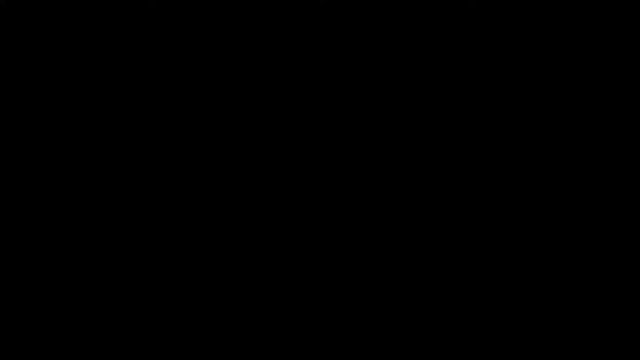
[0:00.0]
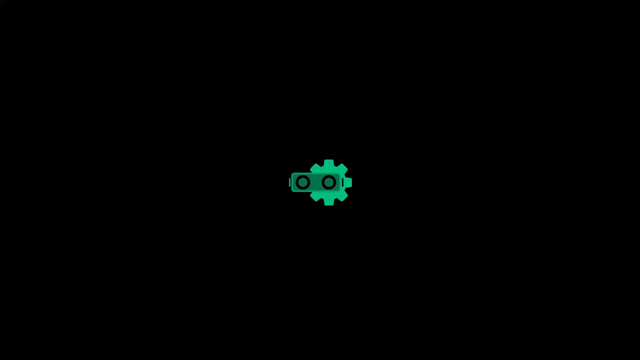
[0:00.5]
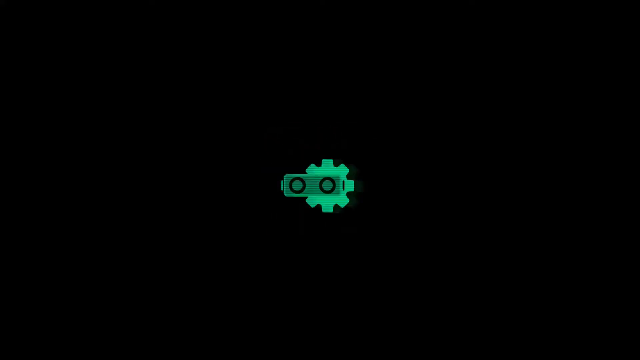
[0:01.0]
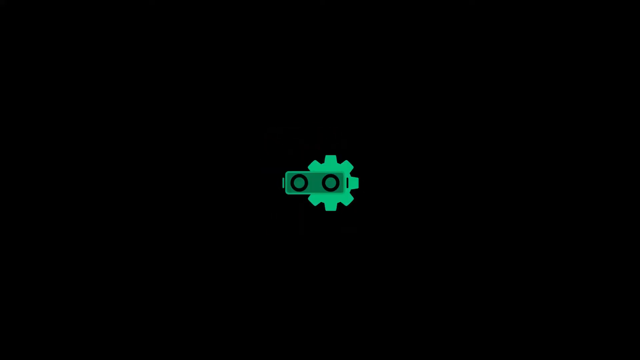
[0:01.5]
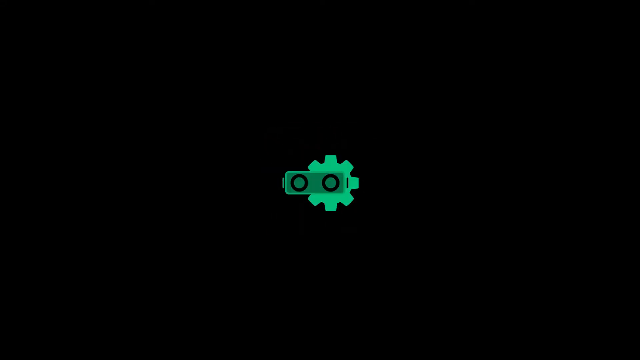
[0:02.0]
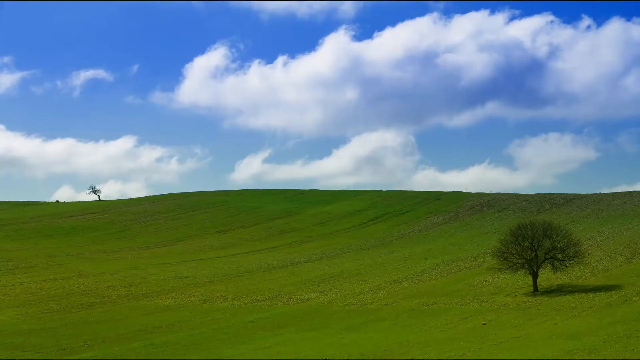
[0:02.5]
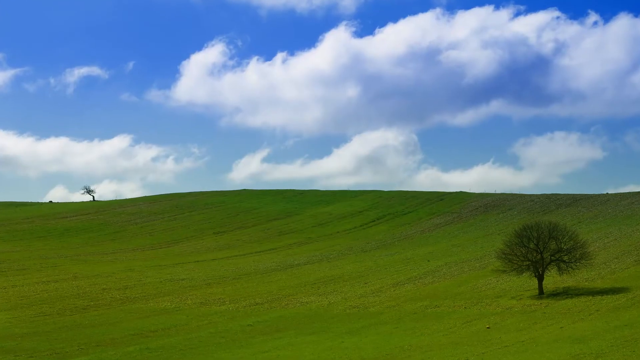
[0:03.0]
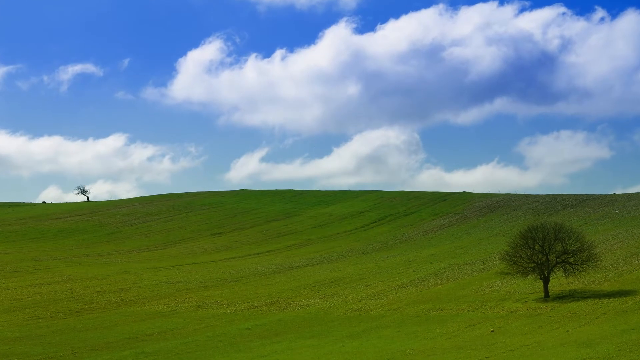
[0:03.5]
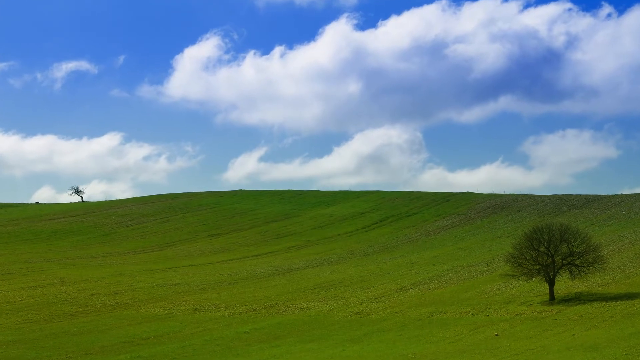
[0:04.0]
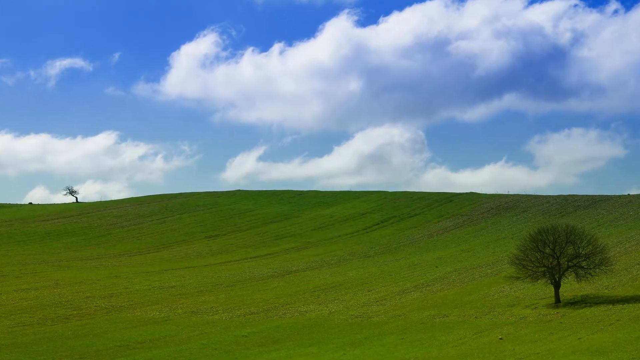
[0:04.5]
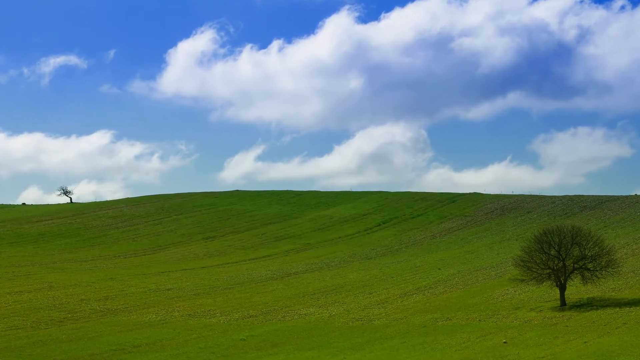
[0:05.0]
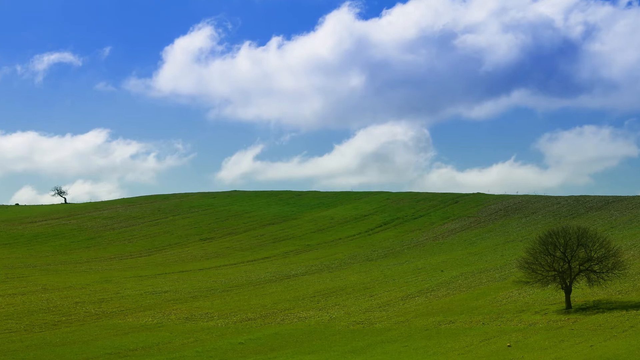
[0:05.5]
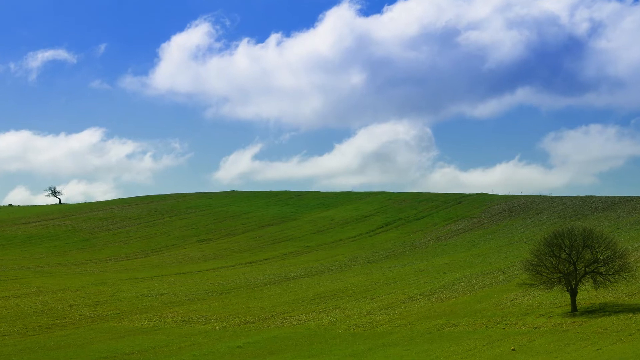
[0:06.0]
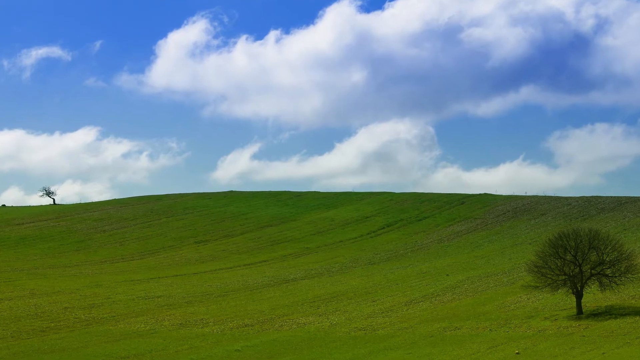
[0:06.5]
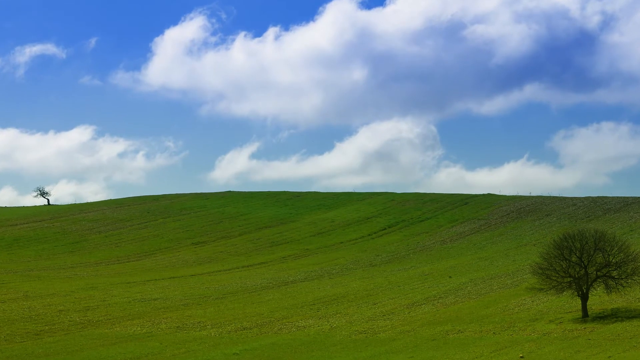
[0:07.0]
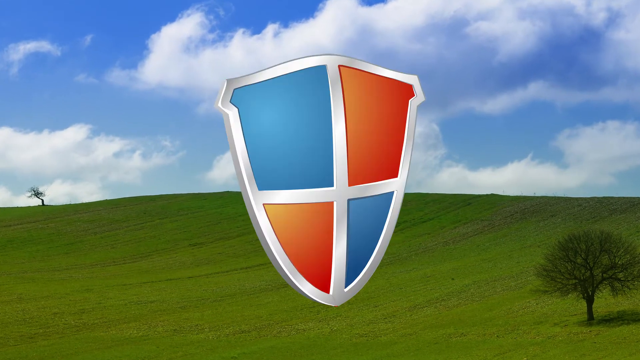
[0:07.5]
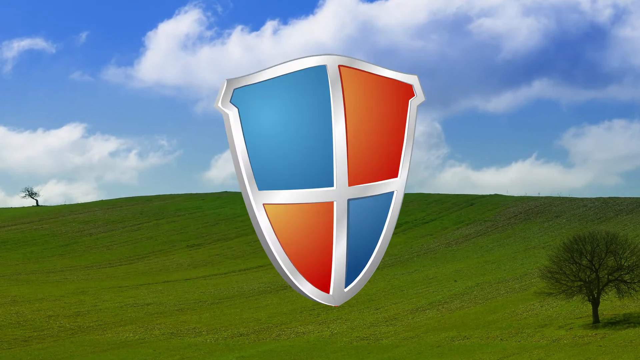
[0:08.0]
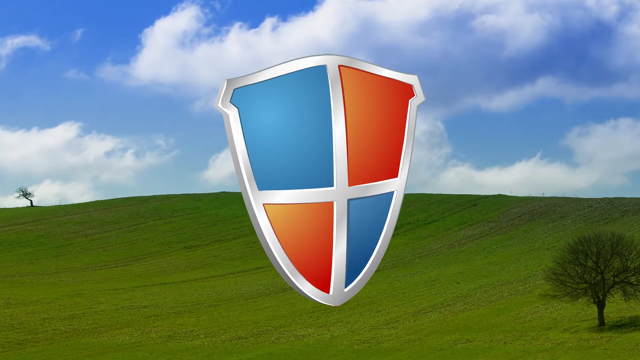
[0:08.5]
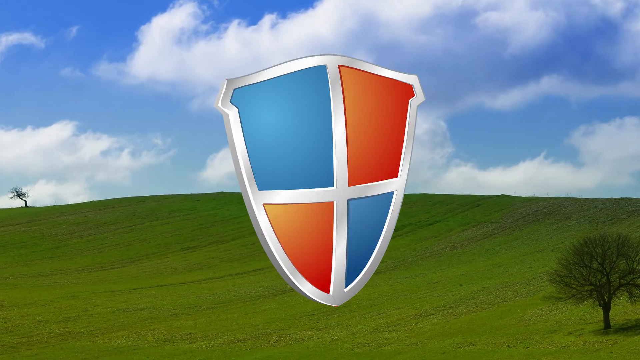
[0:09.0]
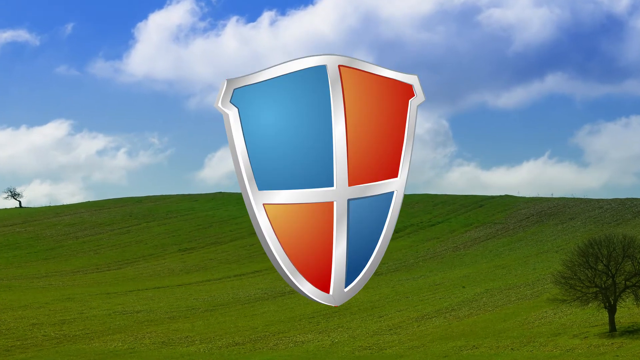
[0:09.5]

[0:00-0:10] The video opens with an odd little icon that looks like a gear attached to something colored green. It then shows a grassy slope with a tree in the bottom right, another tree in the top left, and clouds, almost like a desktop background. A shield pops up that almost resembles the Windows symbol, but not quite. The shield is two-toned, blue and red, with silver detailing that may be embroidery.